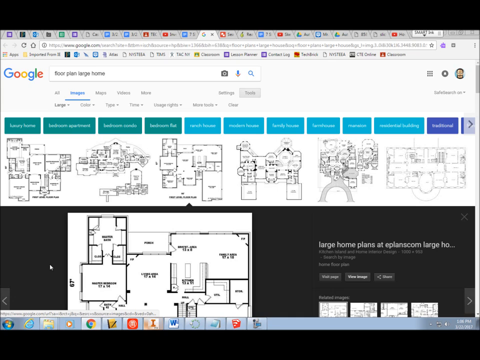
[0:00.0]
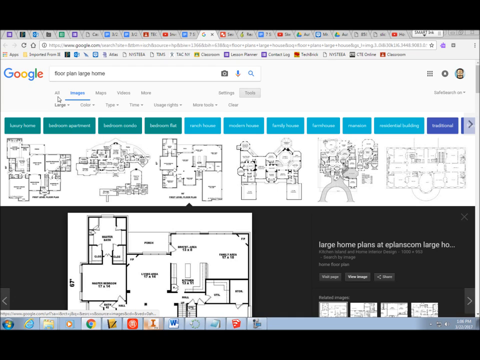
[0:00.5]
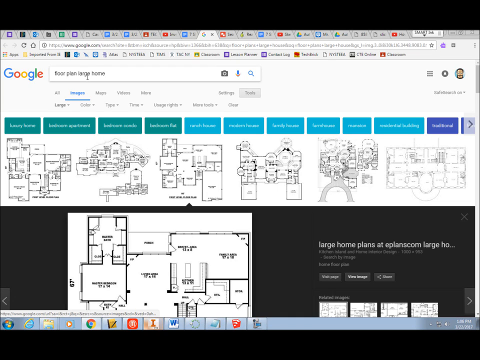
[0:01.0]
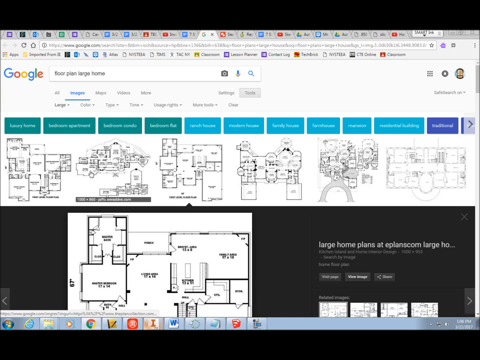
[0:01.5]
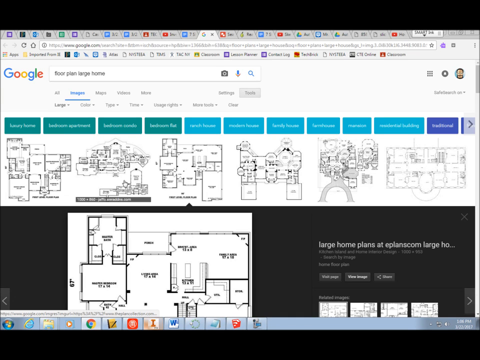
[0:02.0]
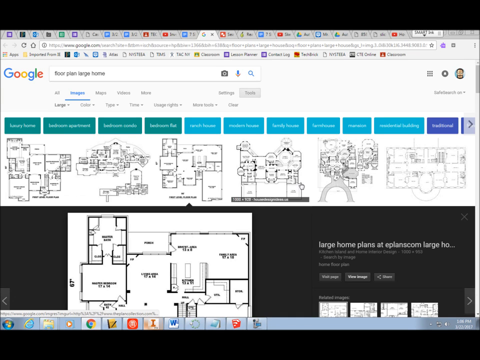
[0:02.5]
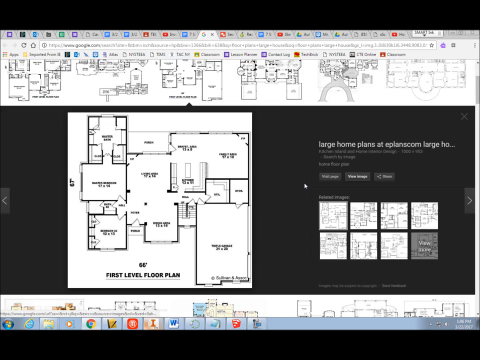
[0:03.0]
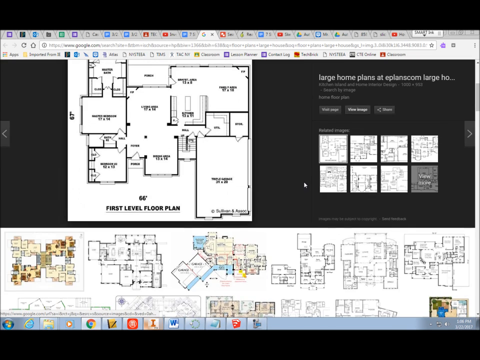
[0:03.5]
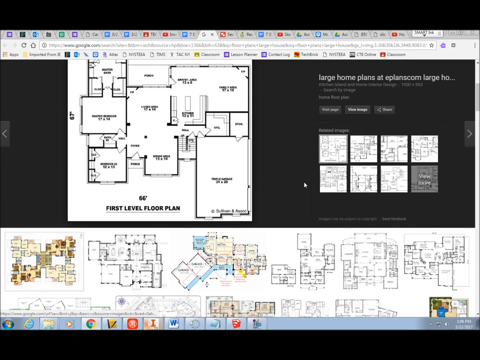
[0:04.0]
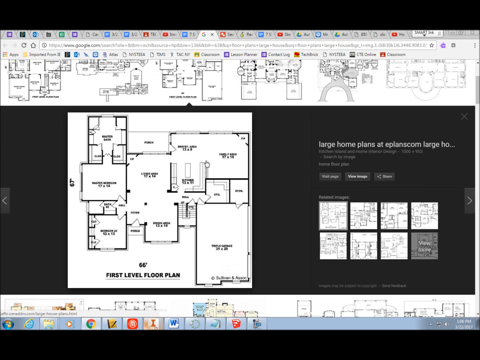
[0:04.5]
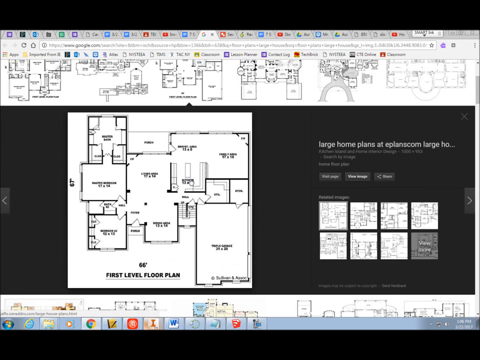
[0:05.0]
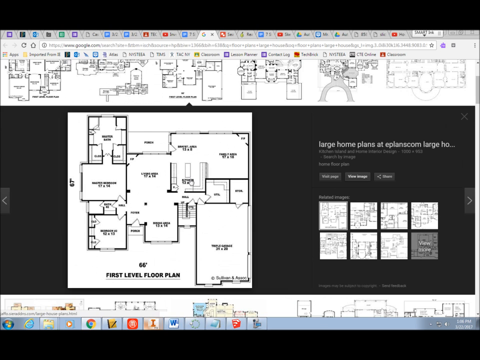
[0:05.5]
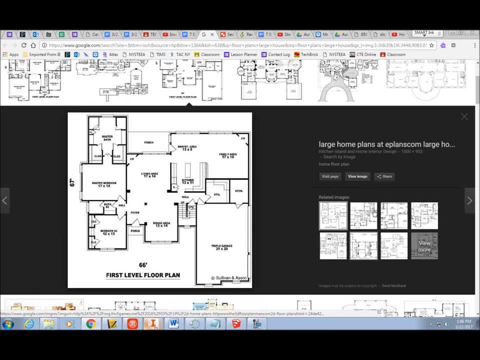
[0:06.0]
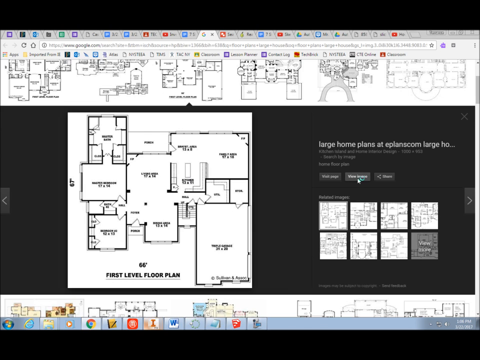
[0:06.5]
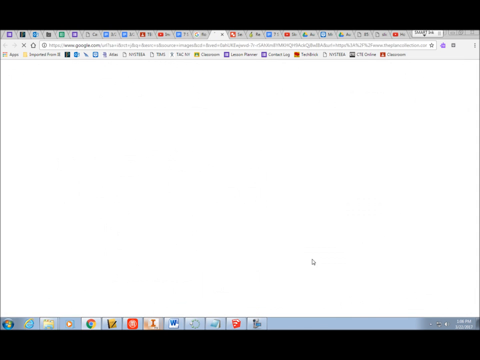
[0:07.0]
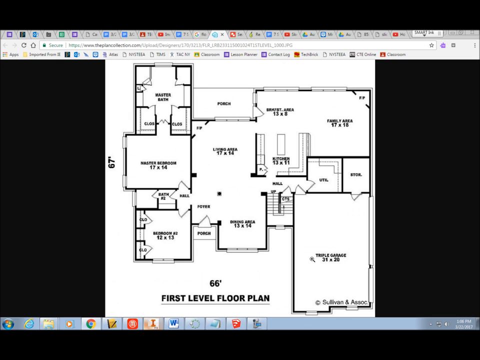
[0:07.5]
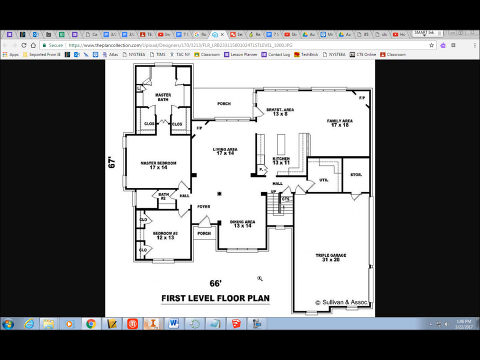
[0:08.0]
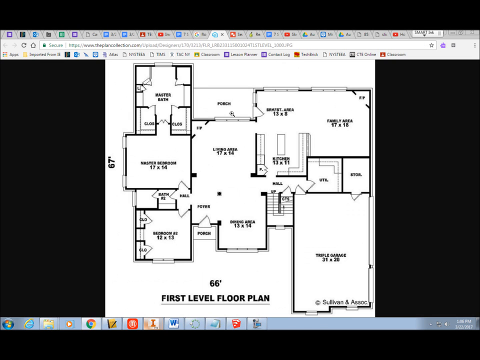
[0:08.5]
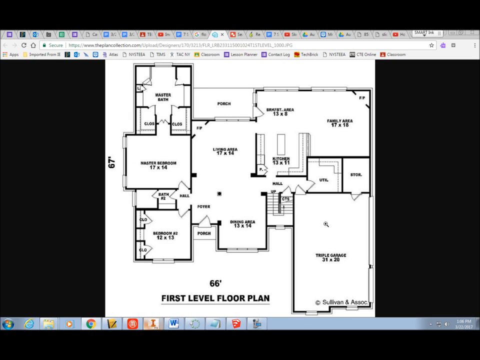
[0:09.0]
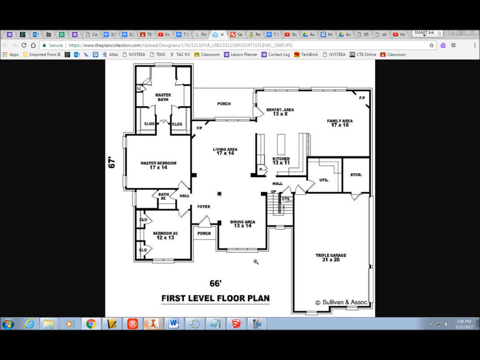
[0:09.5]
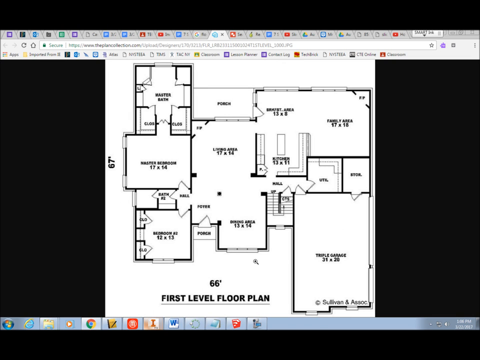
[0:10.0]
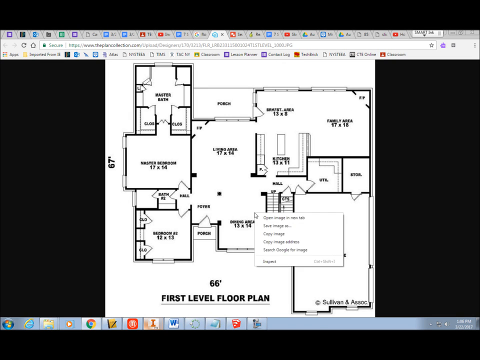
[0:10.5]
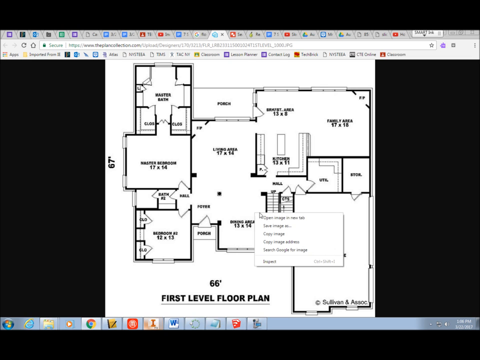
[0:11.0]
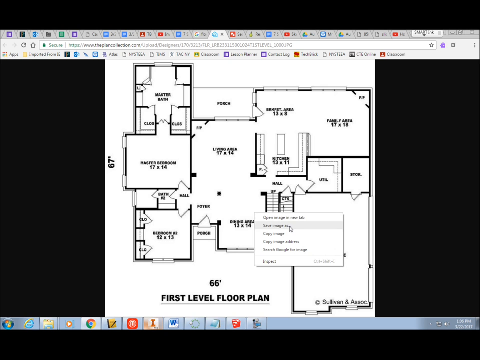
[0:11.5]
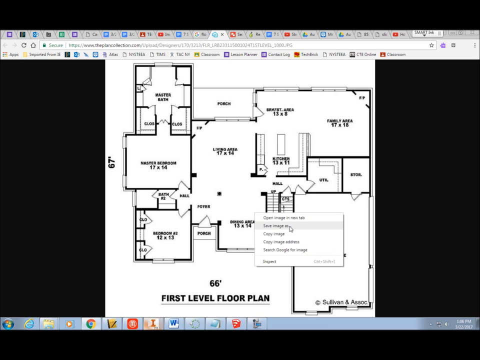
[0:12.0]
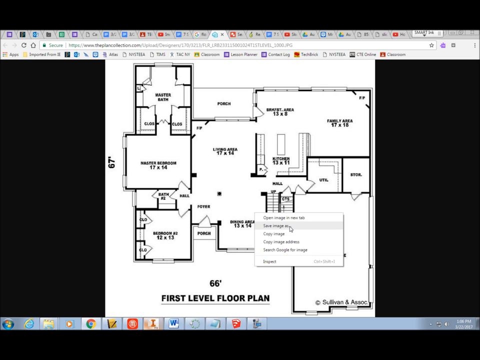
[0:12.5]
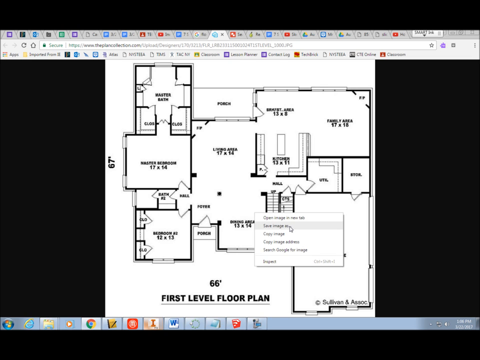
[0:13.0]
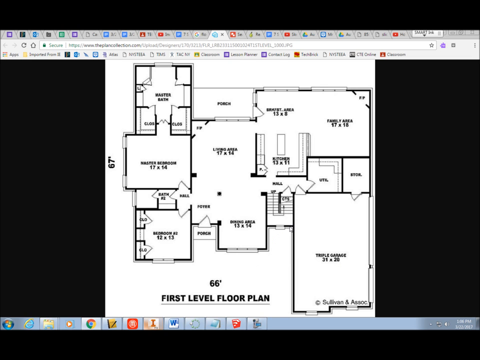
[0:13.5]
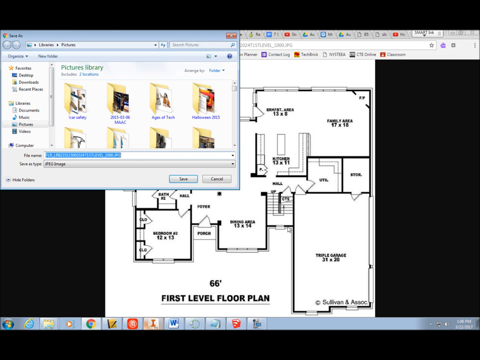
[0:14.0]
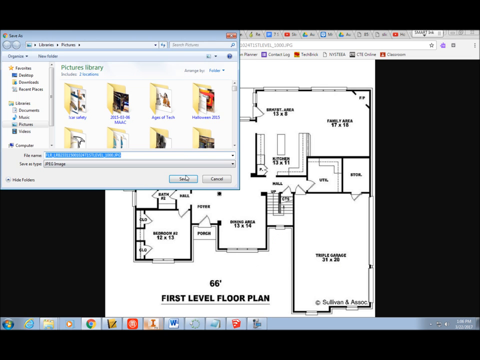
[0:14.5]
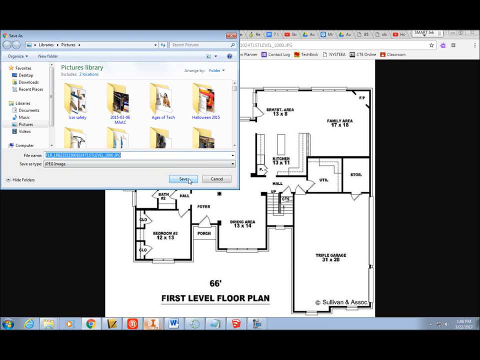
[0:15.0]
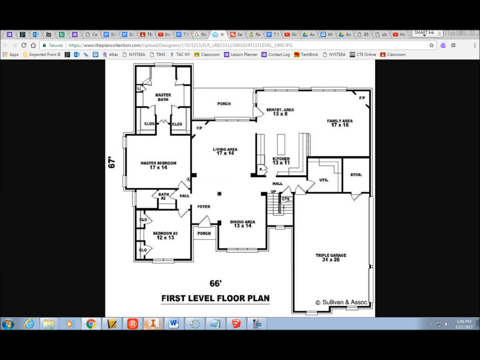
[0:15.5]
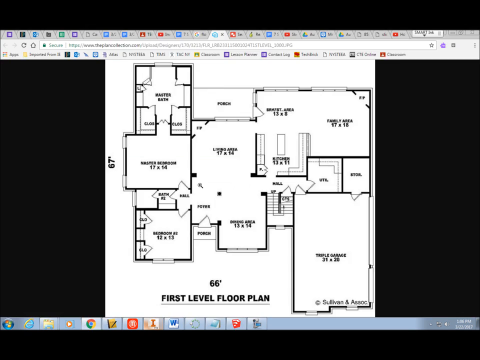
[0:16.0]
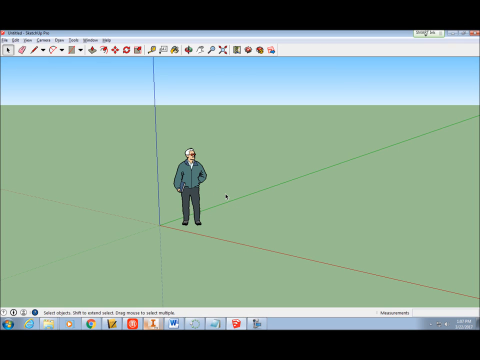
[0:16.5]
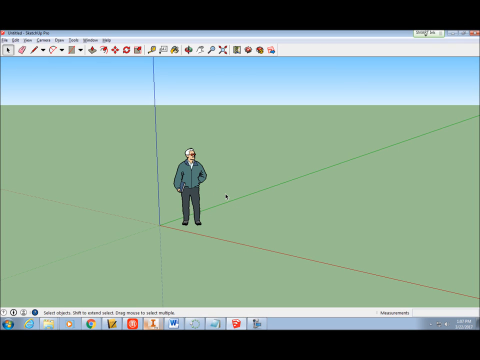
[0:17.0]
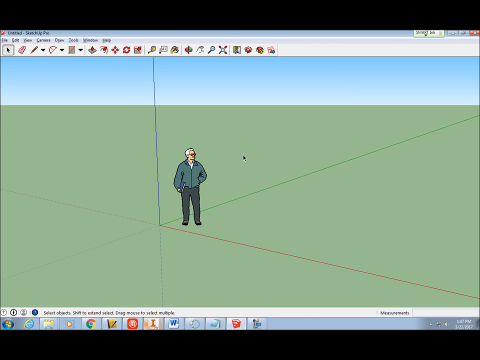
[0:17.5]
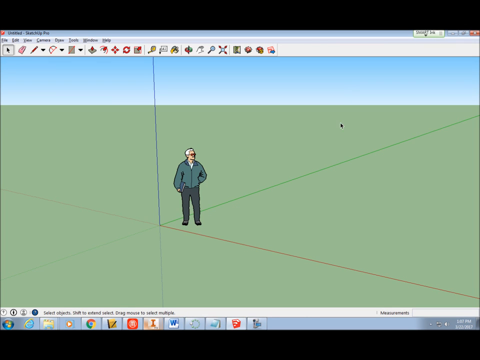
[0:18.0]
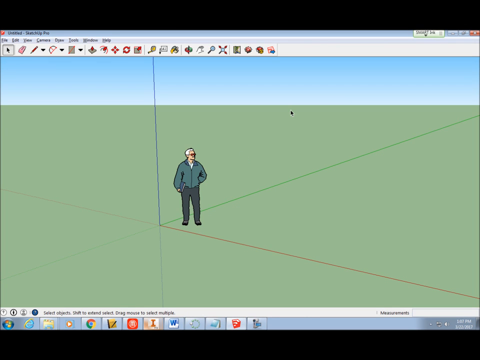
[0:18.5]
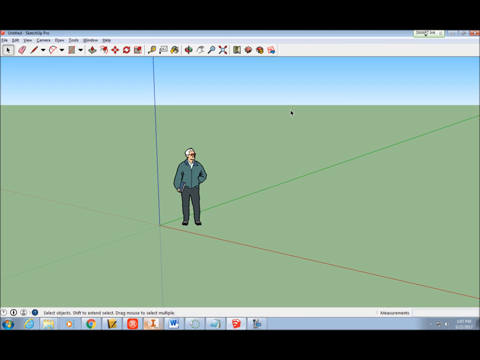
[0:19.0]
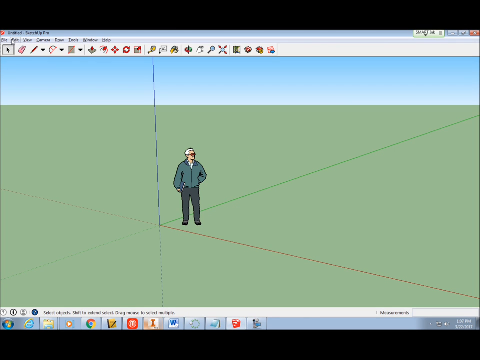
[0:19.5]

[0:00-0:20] A Google search for a large home floor plan shows various plans. The user scrolls and selects one that has dimensions and is labeled "first level floor." It includes the porch, the living area, the master area, the bedroom, the washroom, the dining area and the kitchen. The user apparently tries to save the picture and clicks save. On a different page, a human stands on a green surface with three lines on it: one green, one blue and one red. The image from Google has apparently been saved.